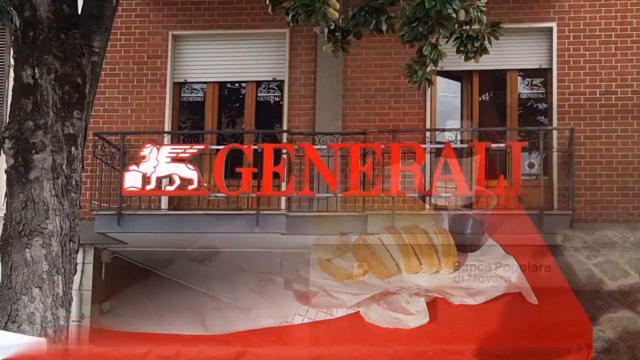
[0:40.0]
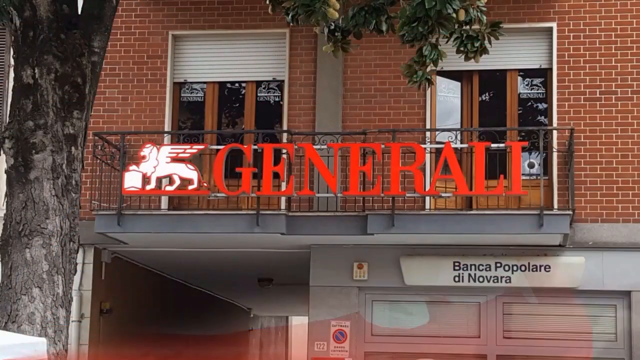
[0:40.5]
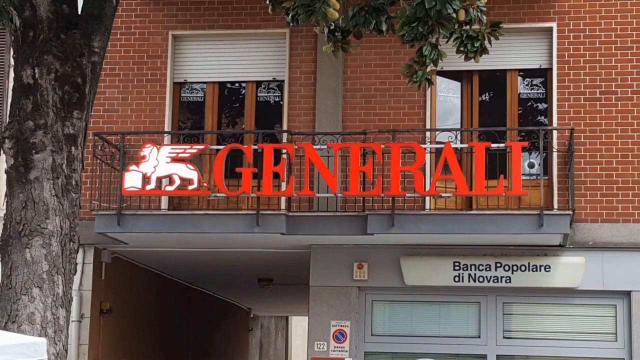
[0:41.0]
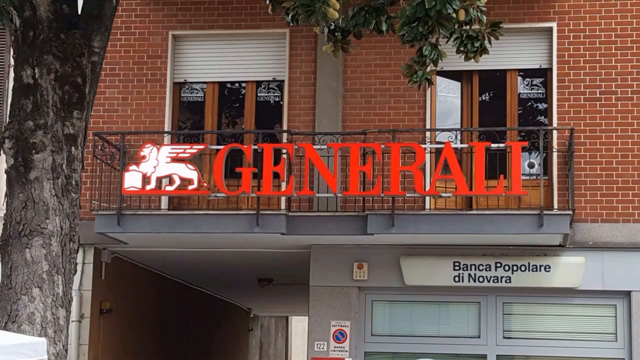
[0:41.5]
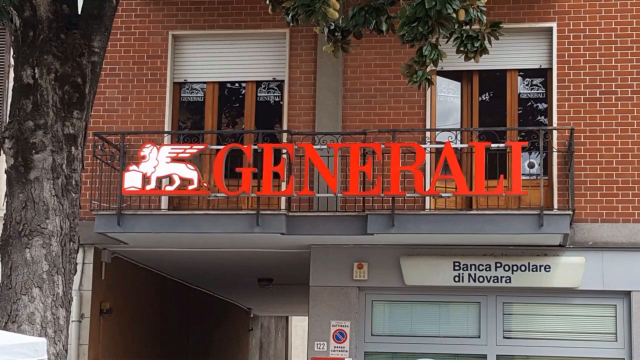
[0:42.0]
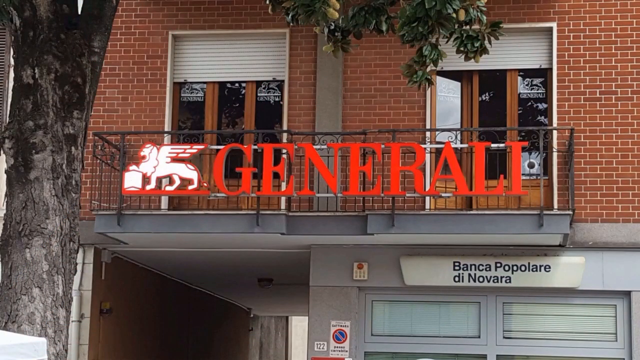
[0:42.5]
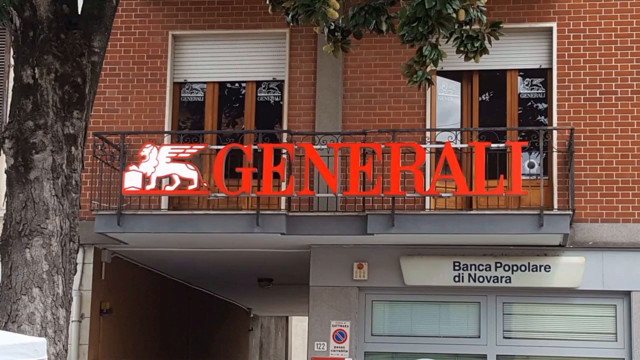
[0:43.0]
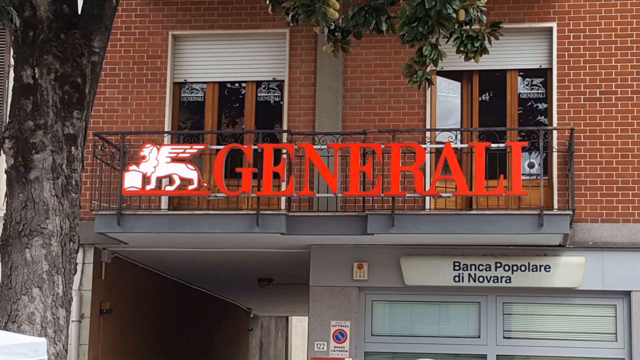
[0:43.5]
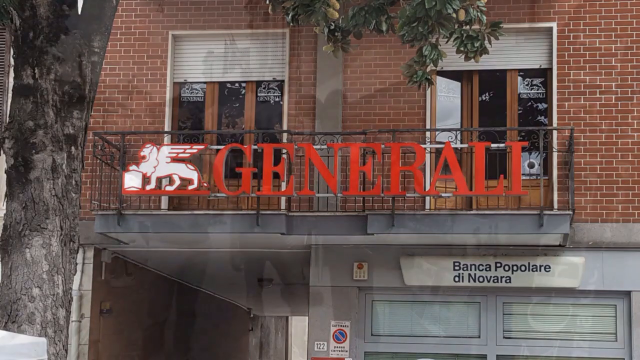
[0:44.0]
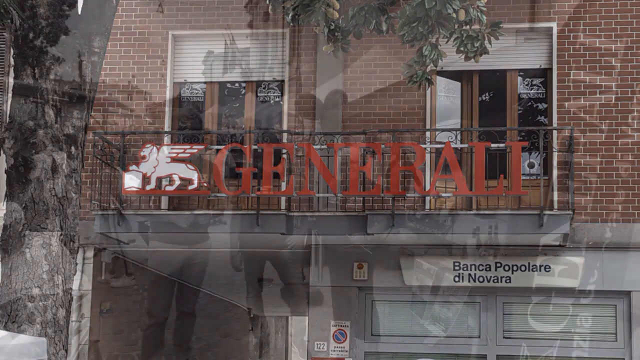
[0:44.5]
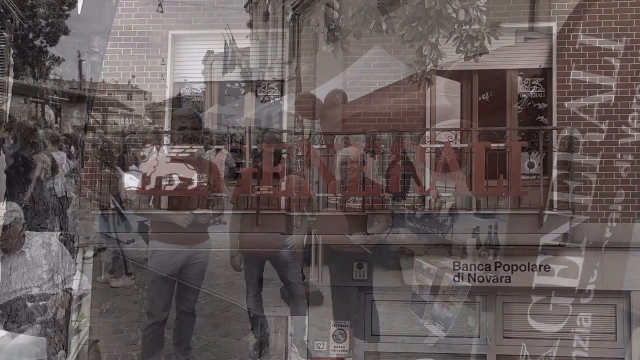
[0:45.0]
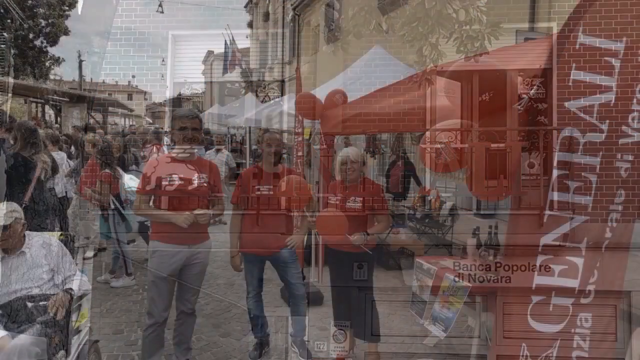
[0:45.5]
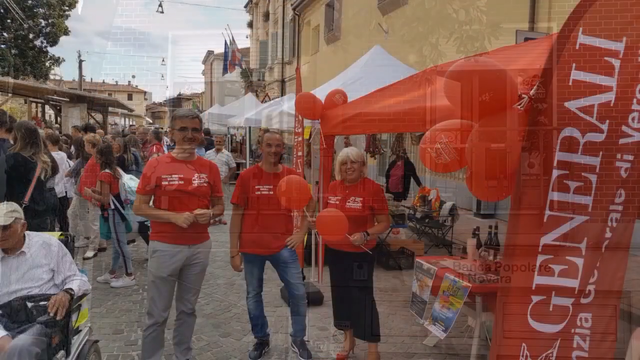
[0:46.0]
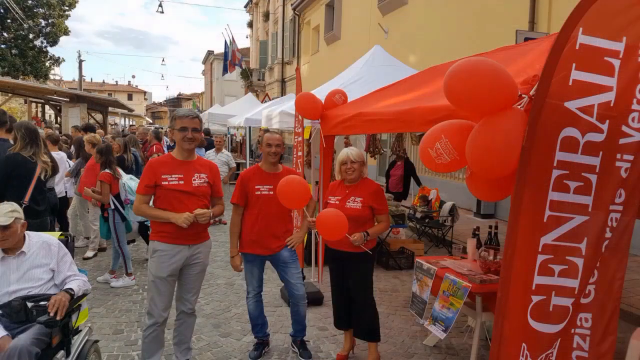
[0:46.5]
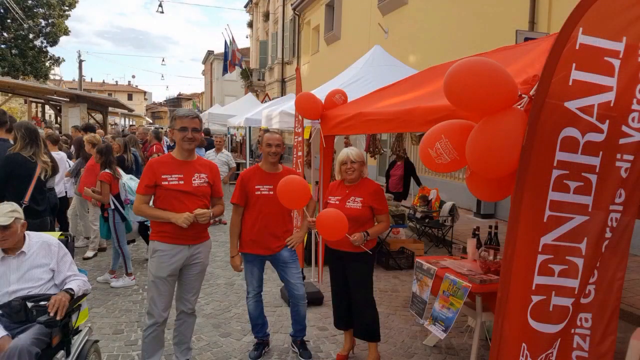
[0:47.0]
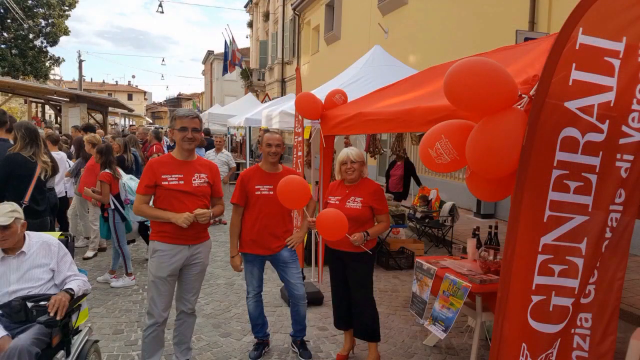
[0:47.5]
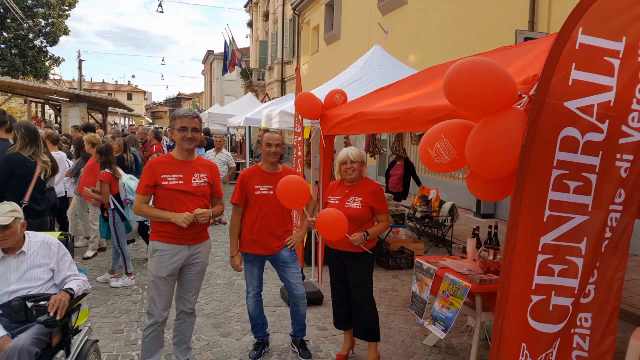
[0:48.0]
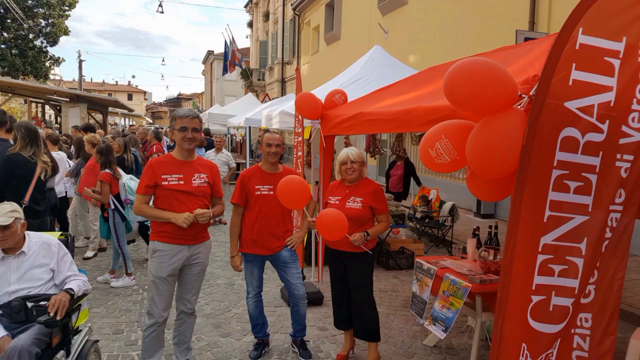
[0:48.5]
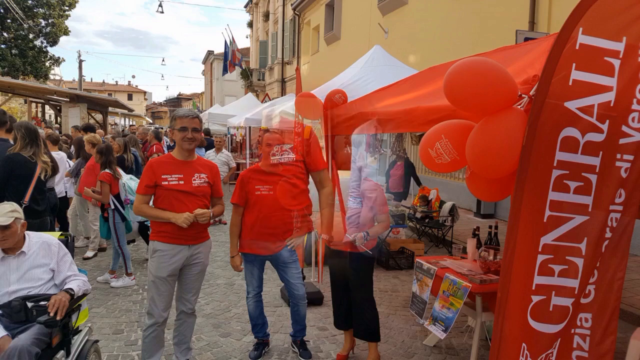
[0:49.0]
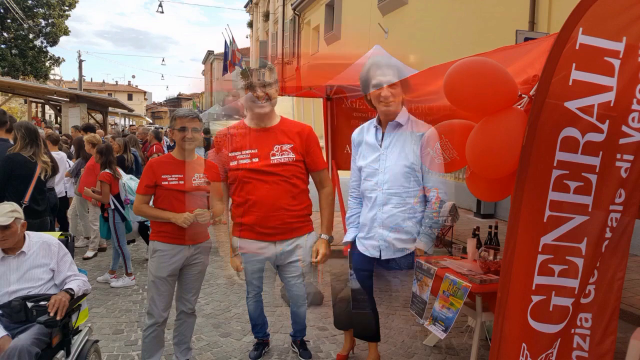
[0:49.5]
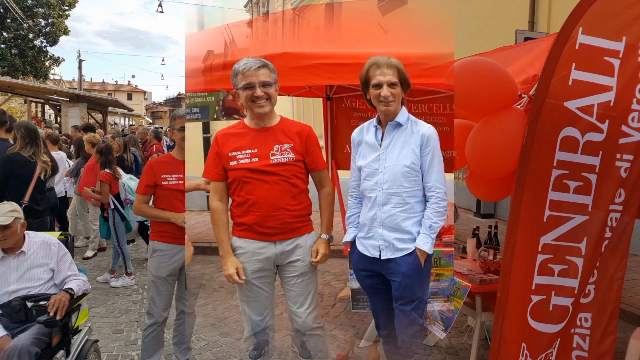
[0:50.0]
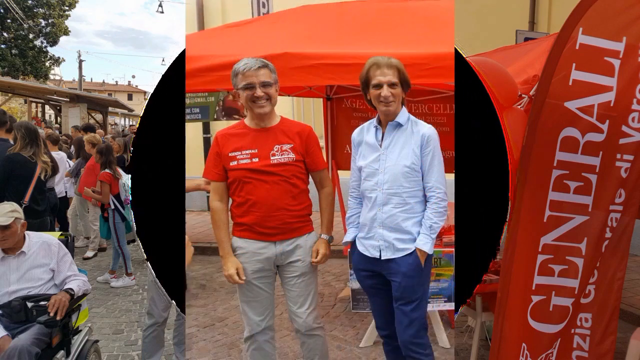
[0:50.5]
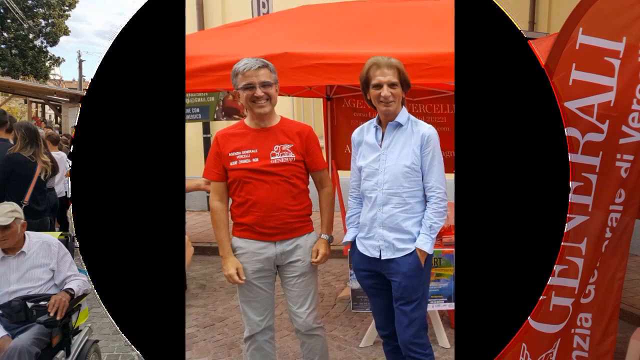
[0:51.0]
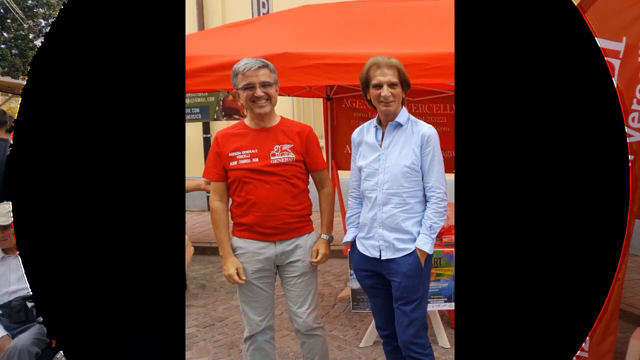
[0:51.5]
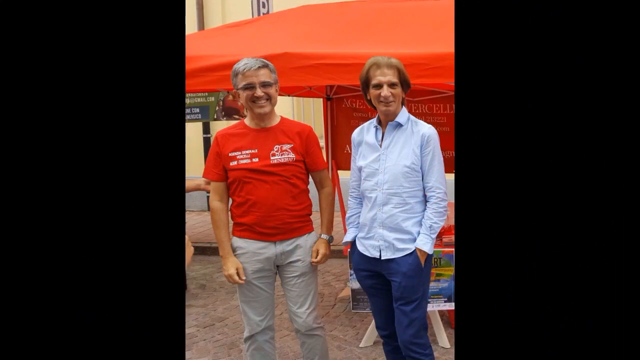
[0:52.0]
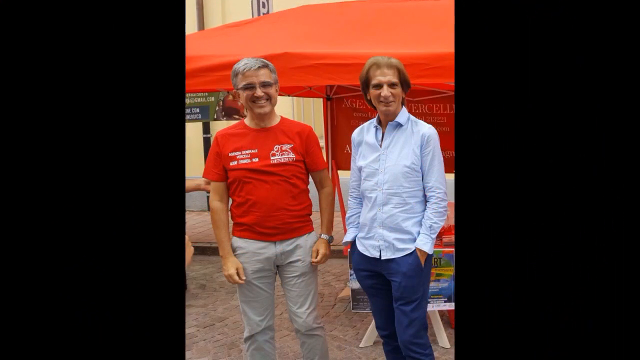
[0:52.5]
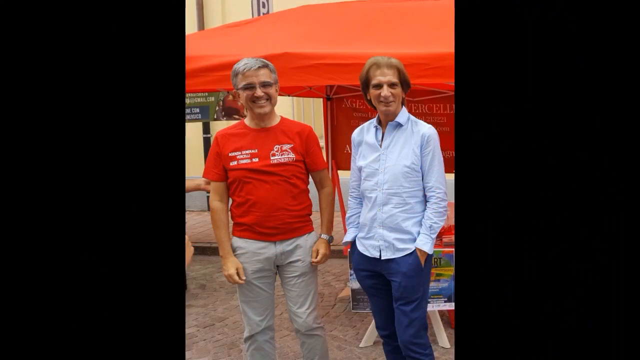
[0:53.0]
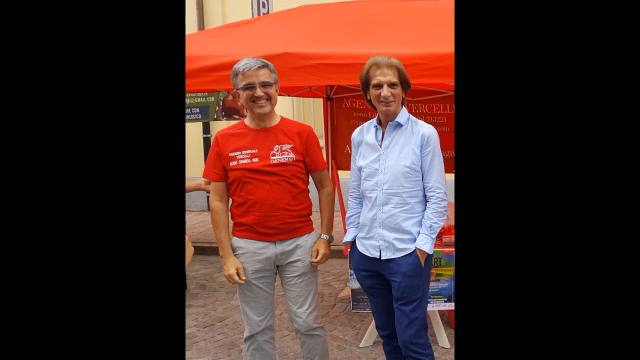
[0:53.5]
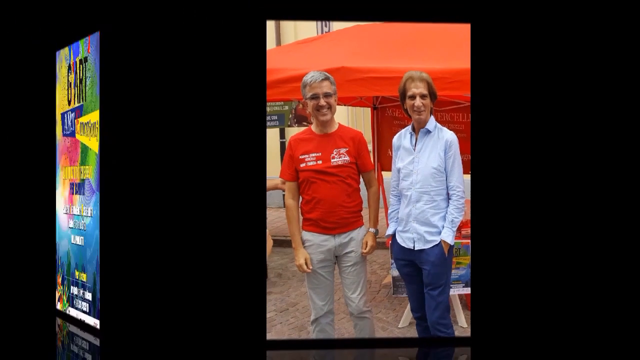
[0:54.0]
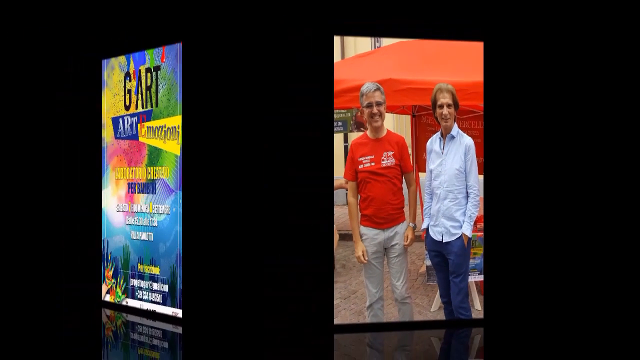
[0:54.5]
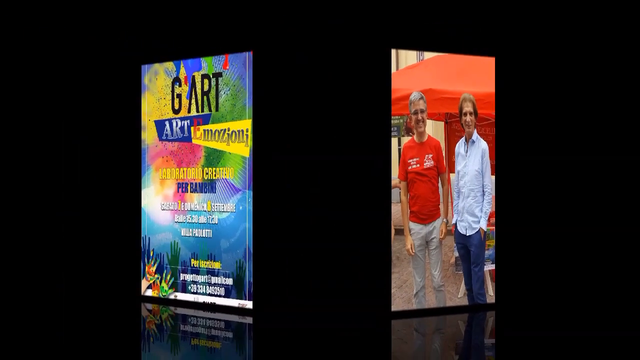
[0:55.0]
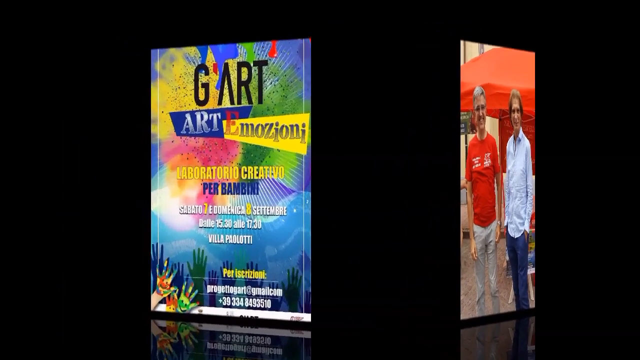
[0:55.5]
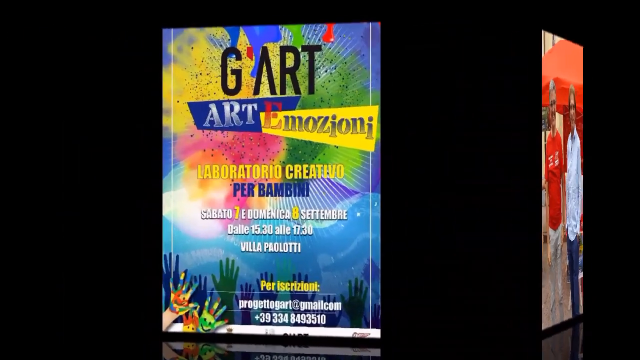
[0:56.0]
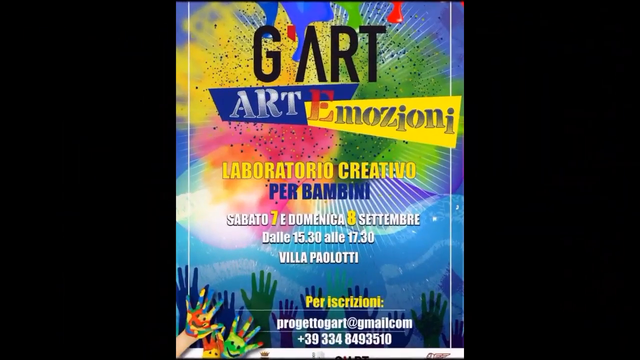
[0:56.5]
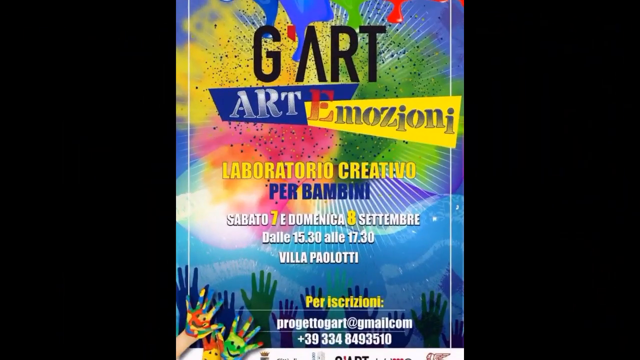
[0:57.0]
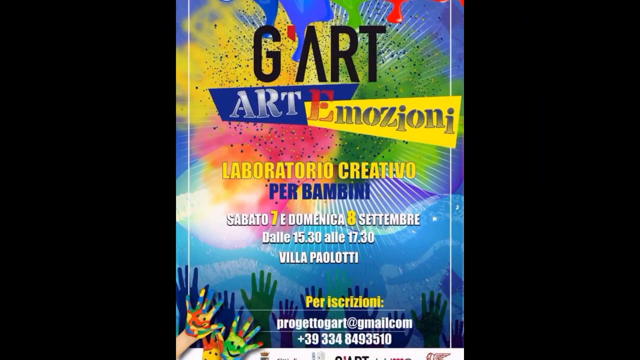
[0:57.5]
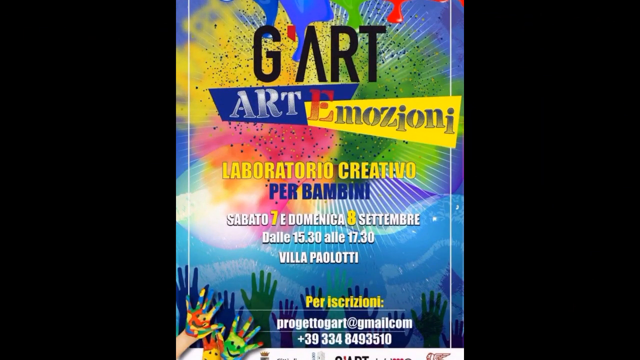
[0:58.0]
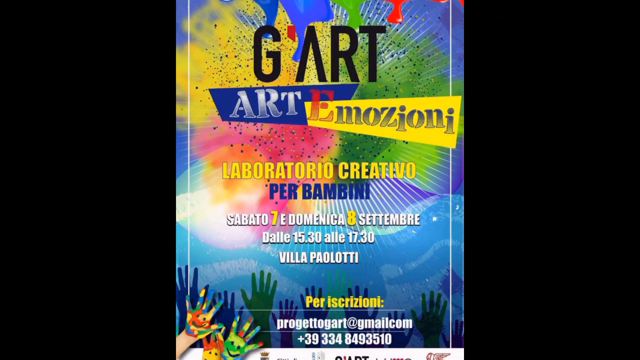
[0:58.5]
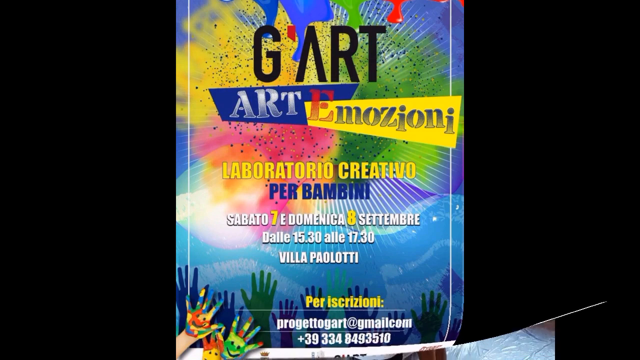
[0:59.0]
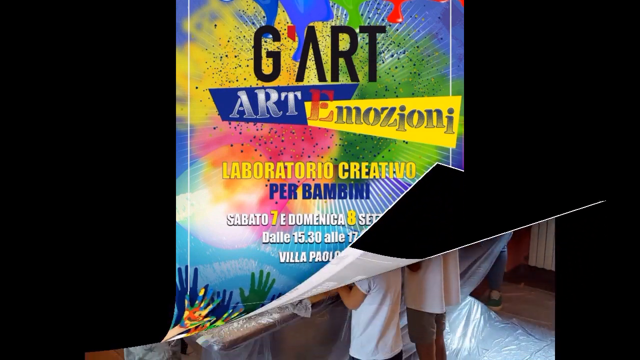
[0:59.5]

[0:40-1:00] An image of a store called General Ollie appears, possibly where the wine is normally associated. The video cuts back to another image of the people in front of the booth, then an image of just a few people, then an image of one person in a red shirt and one person in a long-sleeved, blue, collared button-down shirt. More pictures taken in front of the booth follow before an advertisement for Gart Art Emozioni appears with the date and time of what seems to be some sort of art festival. The video keeps moving through various pictures in what looks like some sort of PowerPoint presentation about how the event went. The people in the pictures seem to be having a good time promoting their wine.